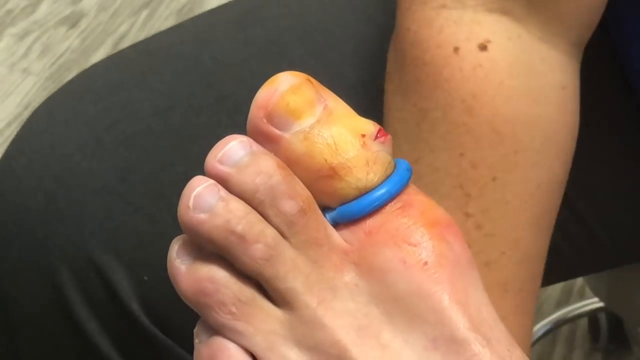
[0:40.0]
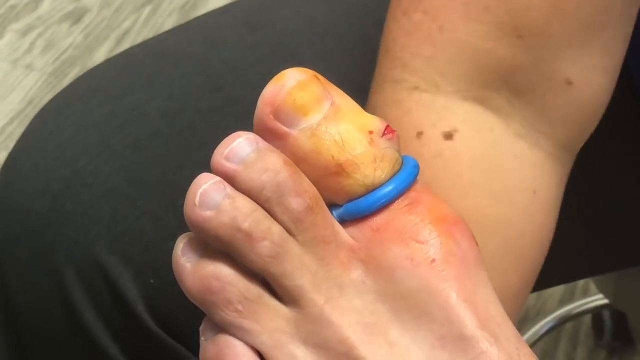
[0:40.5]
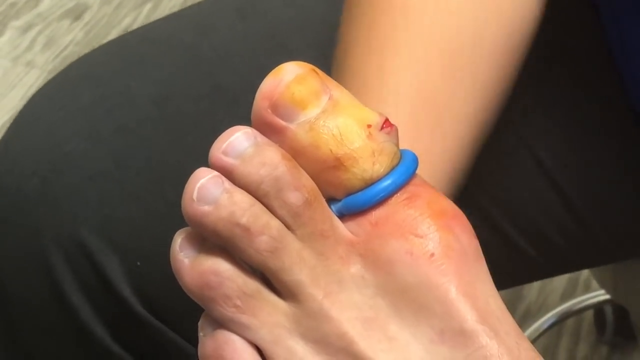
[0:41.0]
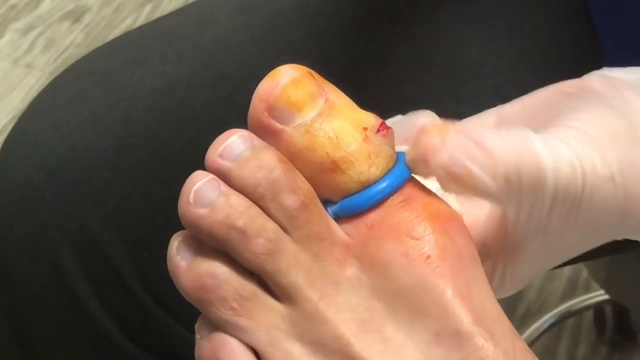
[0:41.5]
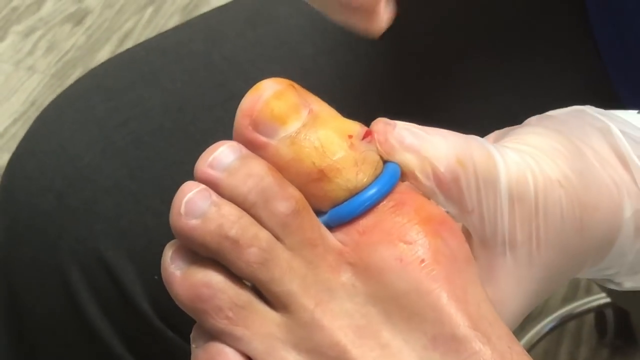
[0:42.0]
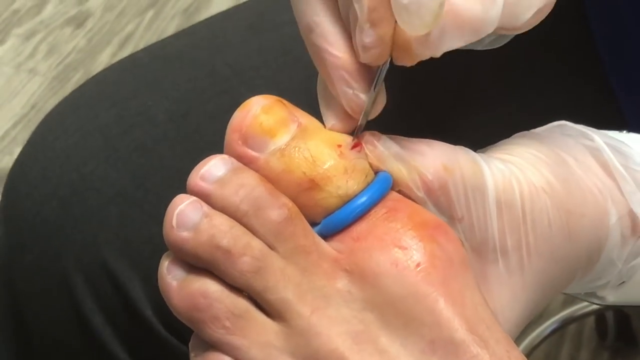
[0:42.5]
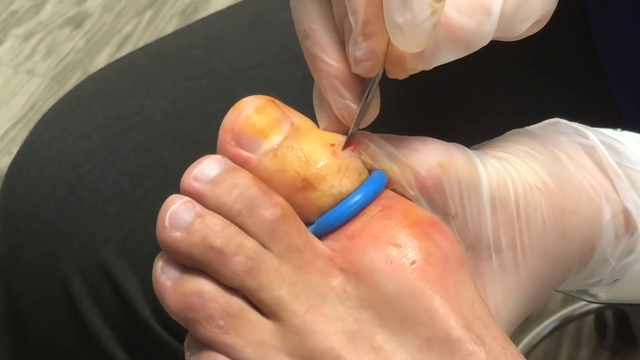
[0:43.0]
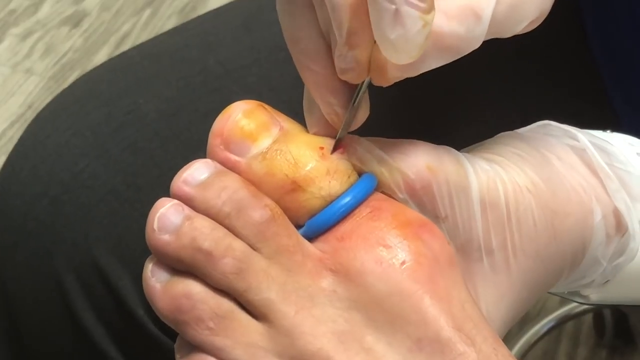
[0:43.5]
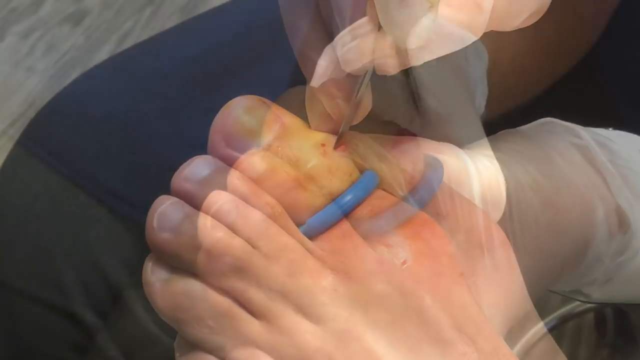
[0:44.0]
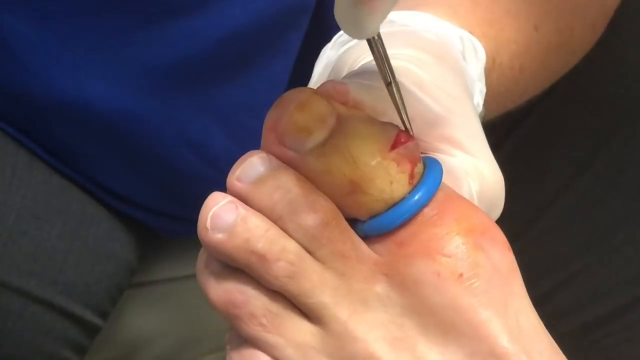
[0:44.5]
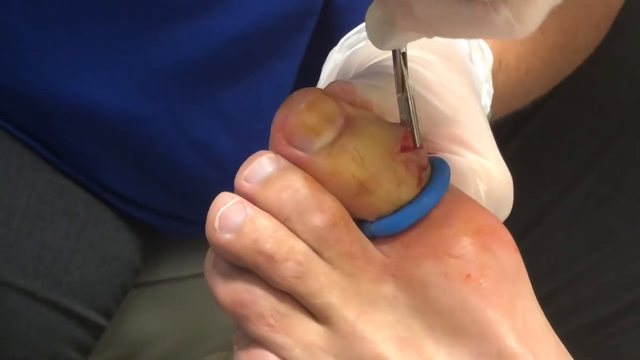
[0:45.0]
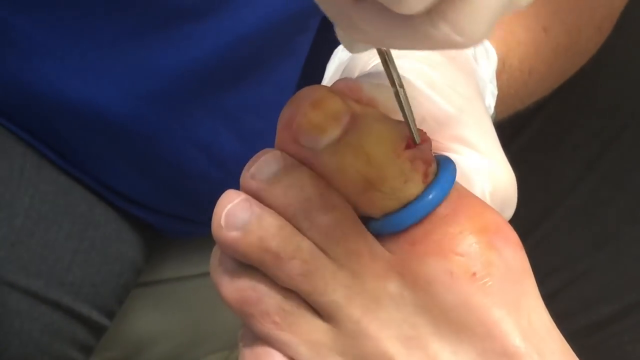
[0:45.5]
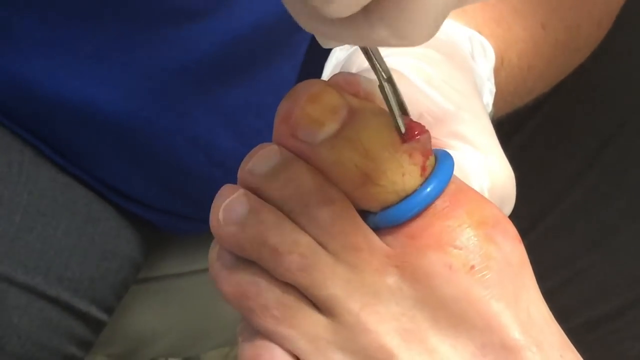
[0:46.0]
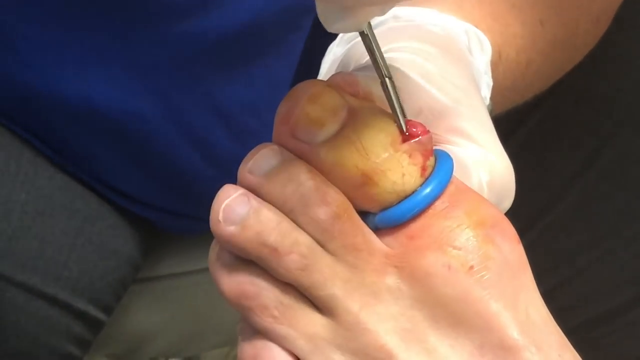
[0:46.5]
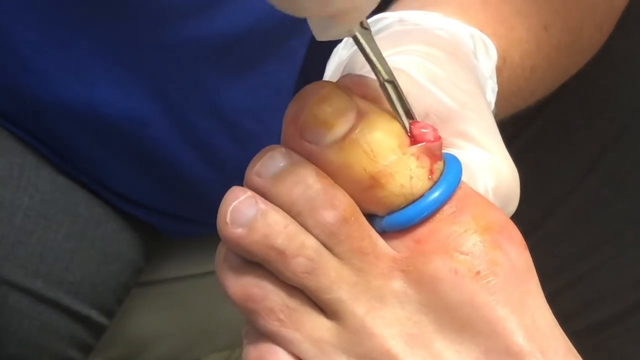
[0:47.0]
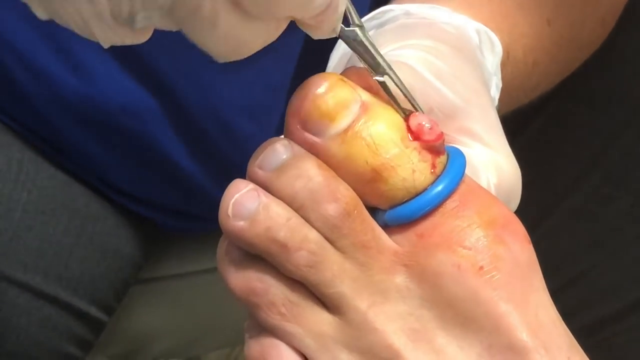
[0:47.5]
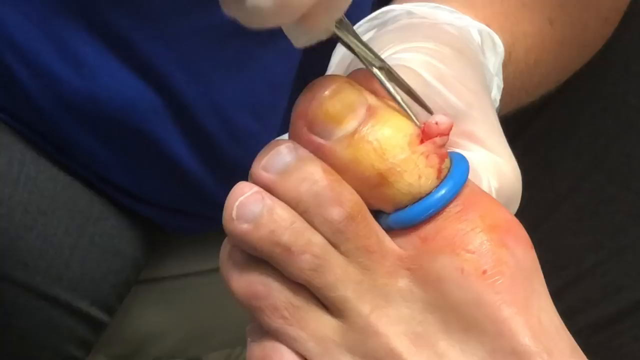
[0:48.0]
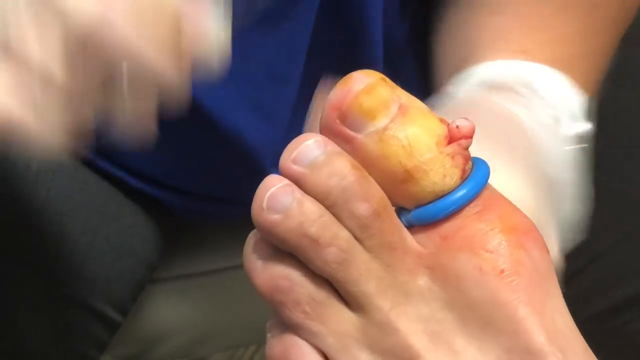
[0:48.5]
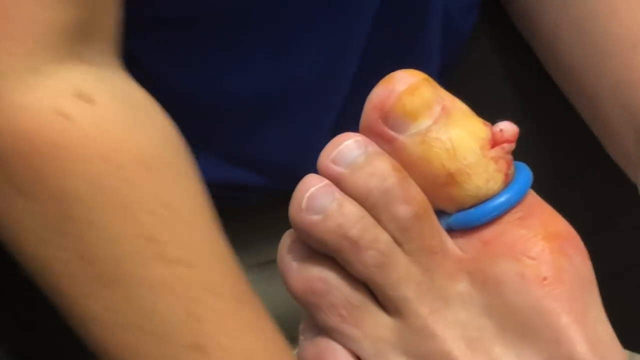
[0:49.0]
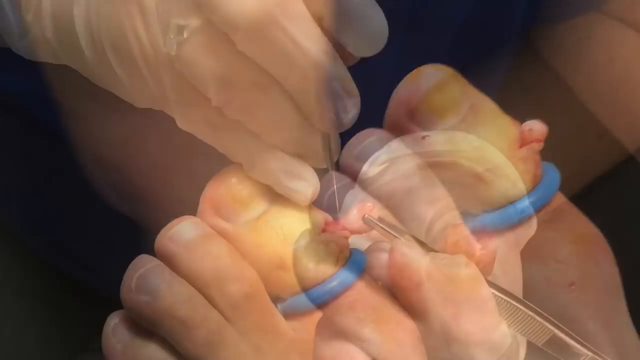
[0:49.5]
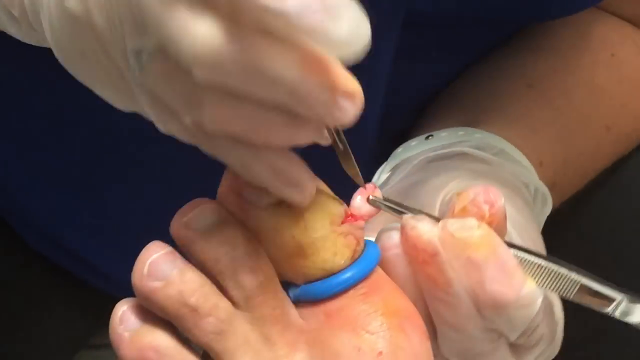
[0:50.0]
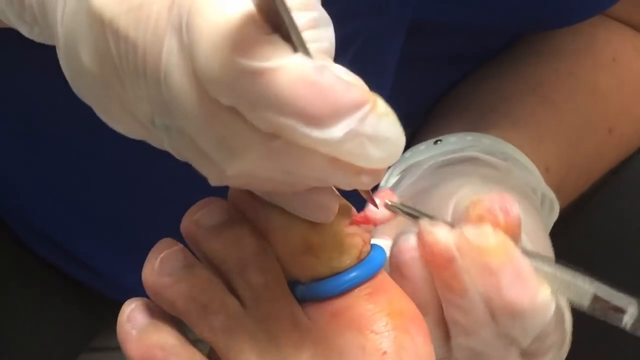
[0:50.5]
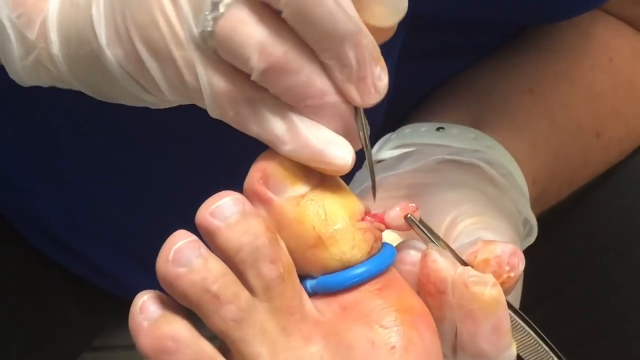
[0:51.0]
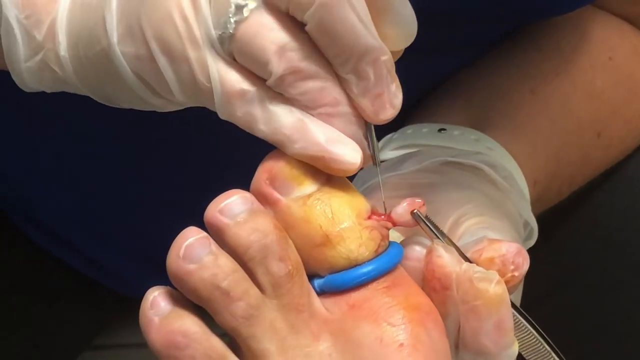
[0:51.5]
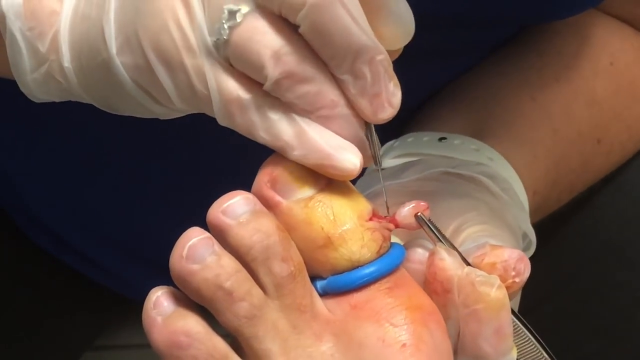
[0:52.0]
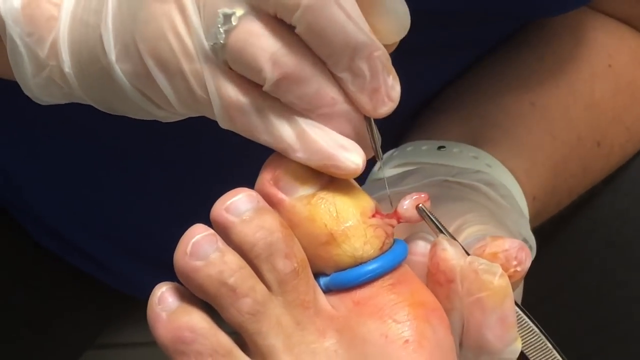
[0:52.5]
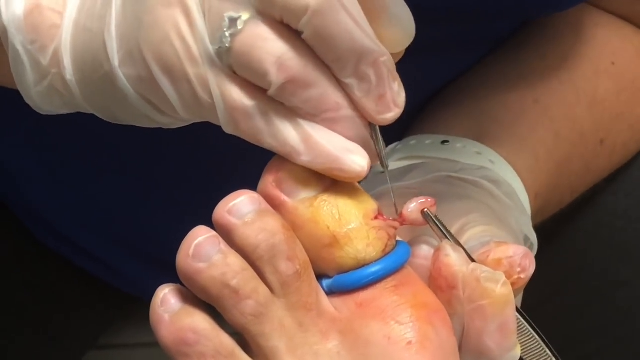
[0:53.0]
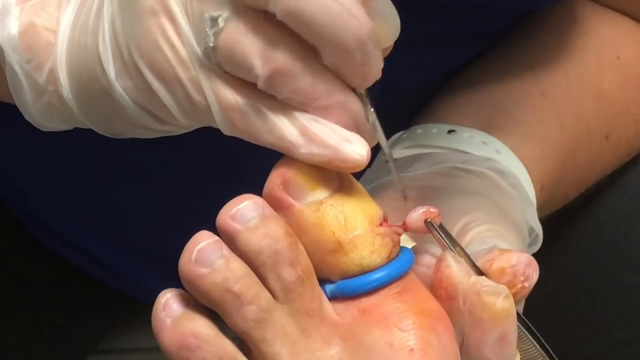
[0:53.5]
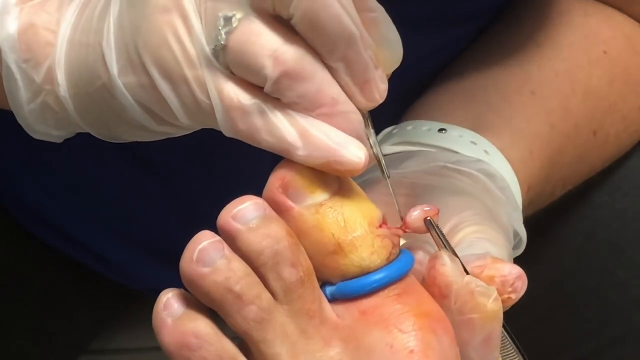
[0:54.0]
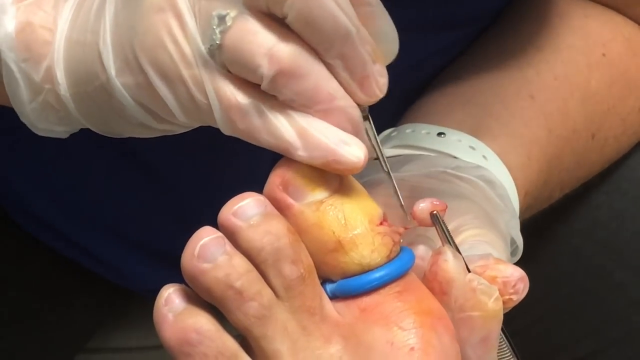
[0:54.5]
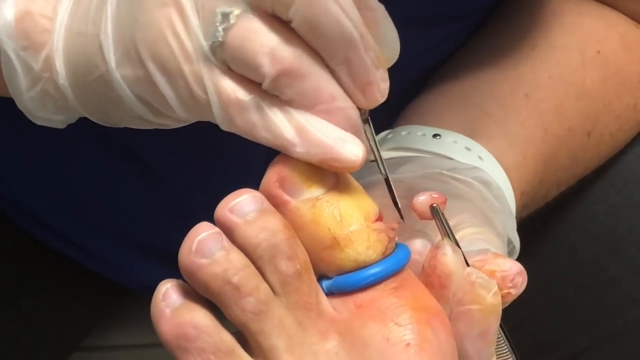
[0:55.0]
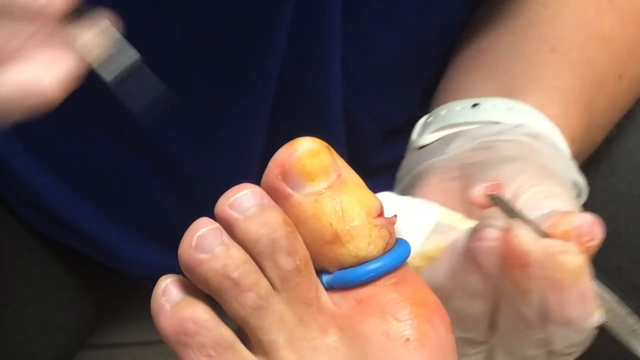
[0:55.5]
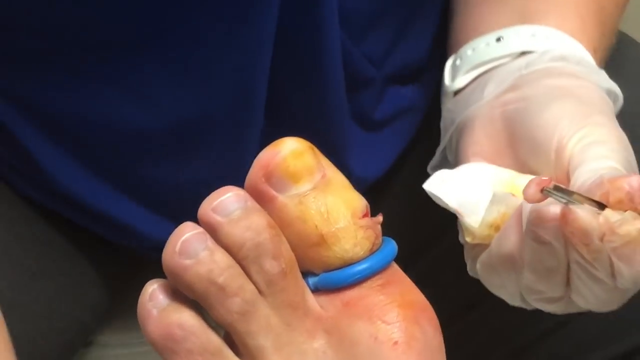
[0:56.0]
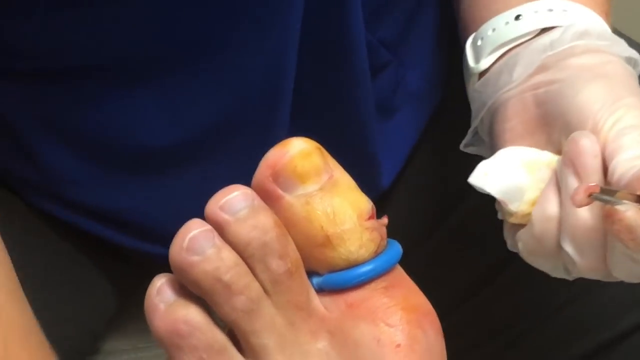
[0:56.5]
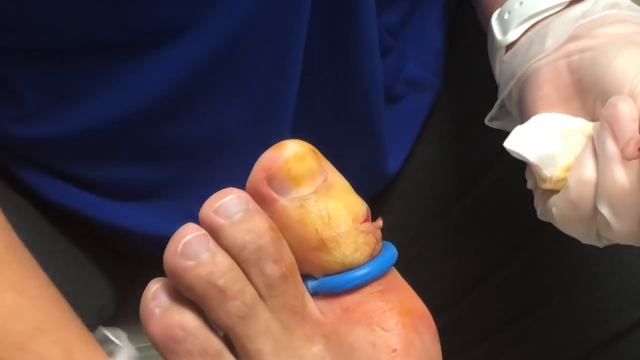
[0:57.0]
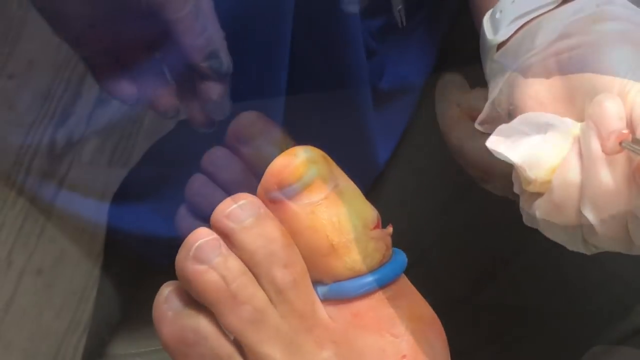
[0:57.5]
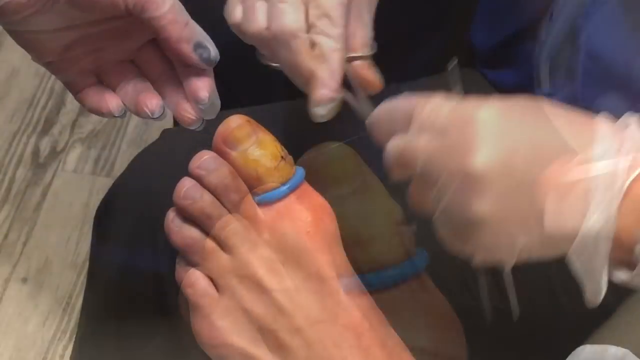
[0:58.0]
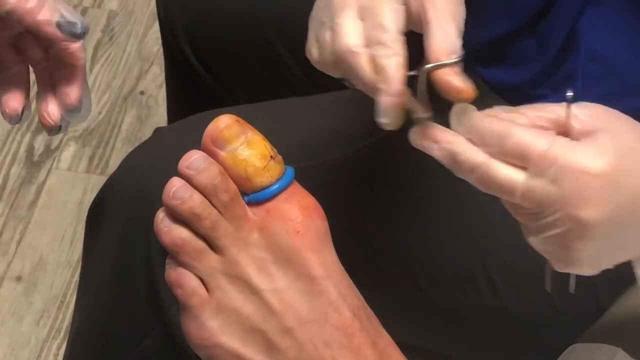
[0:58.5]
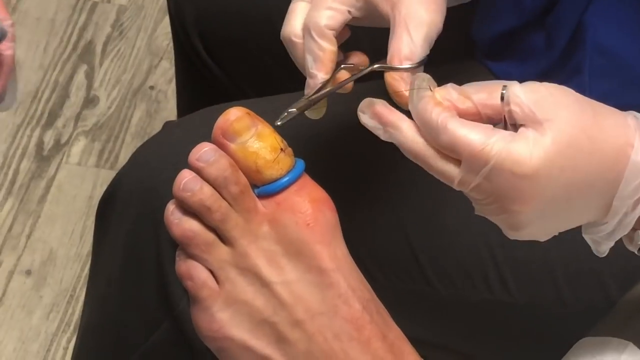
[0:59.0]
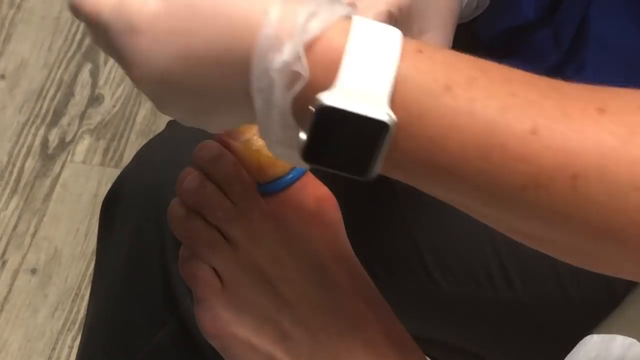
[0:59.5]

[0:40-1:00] The woman, in a sleeveless blue blouse, black pants and gloves, holds up a couple of silver tools with both hands. She wears a white smartwatch on her left hand. A close-up angle shows the foot, where the person's toe is heavily bruised. The woman makes incisions on the side of the toe where there is open skin, and takes a round, circular object out of the toe with some tweezers. The toe has a blue ring around it. The scene is indoors and well lit with artificial light, in a rectangular frame, and the floor in the background looks to be brown and gray hardwood.